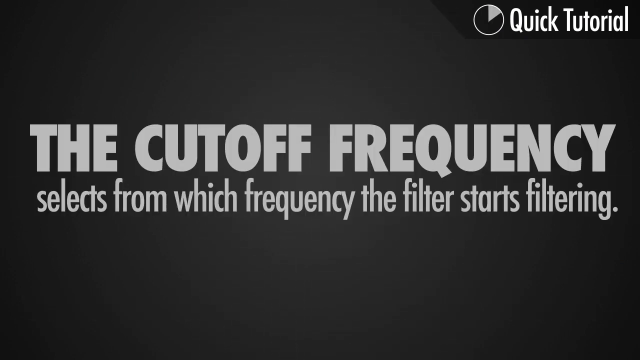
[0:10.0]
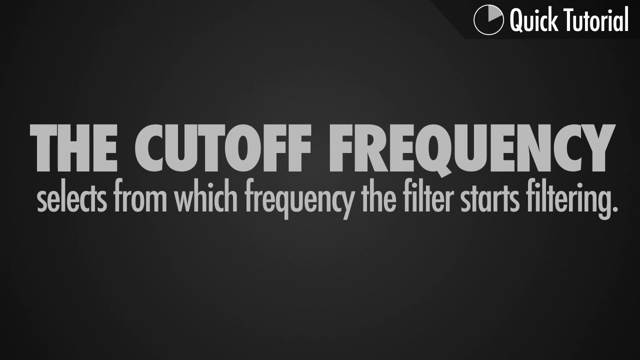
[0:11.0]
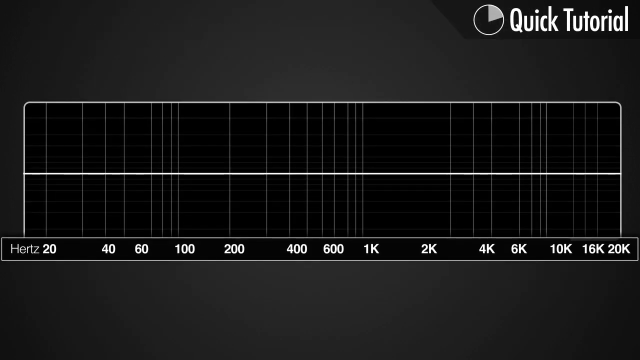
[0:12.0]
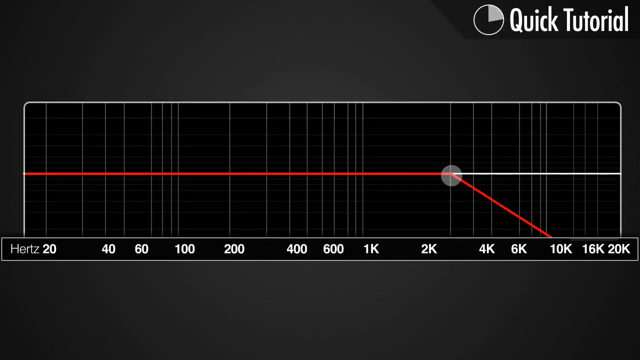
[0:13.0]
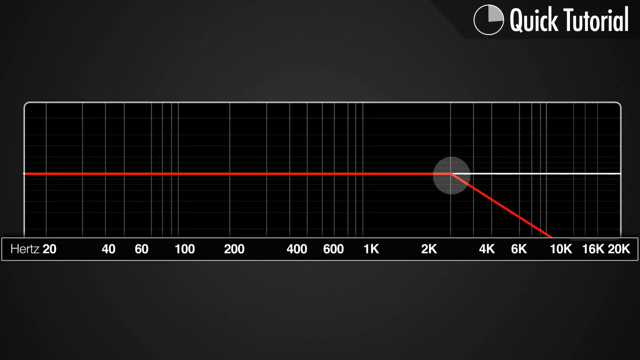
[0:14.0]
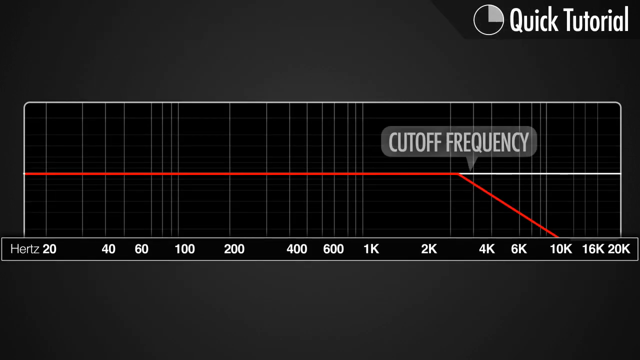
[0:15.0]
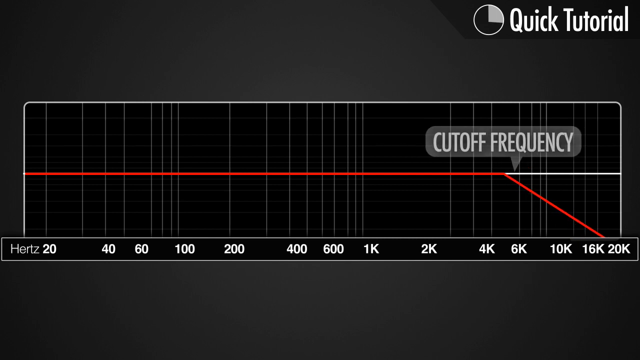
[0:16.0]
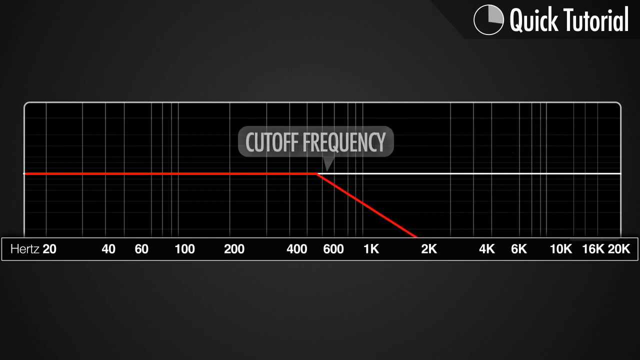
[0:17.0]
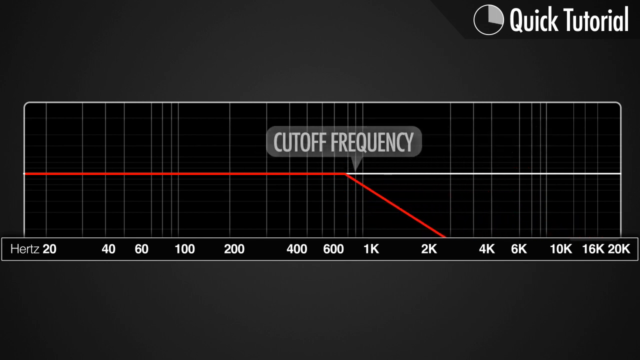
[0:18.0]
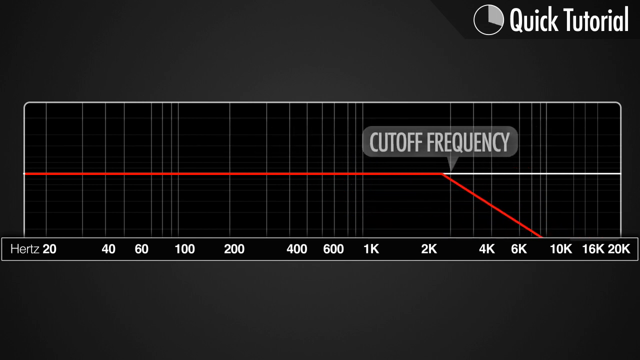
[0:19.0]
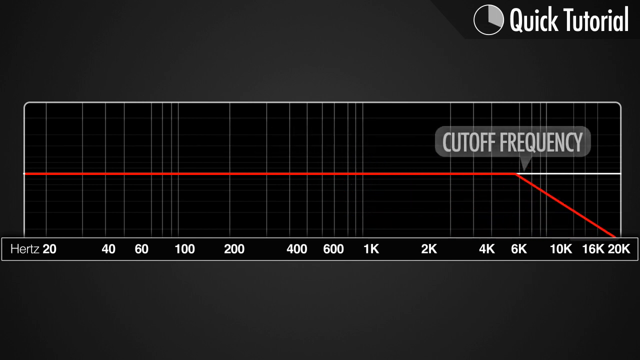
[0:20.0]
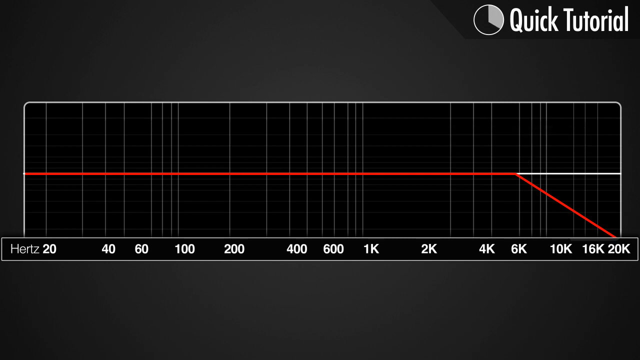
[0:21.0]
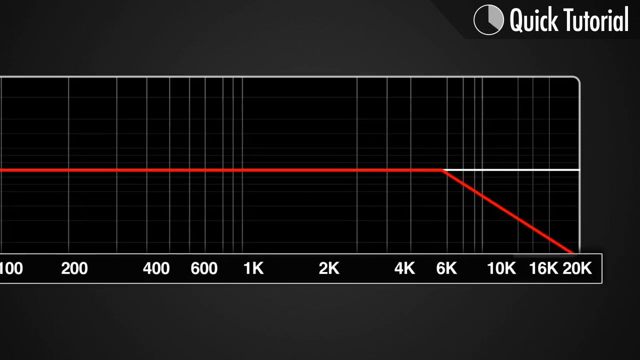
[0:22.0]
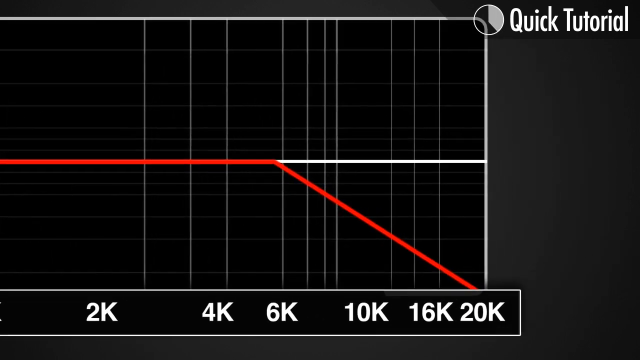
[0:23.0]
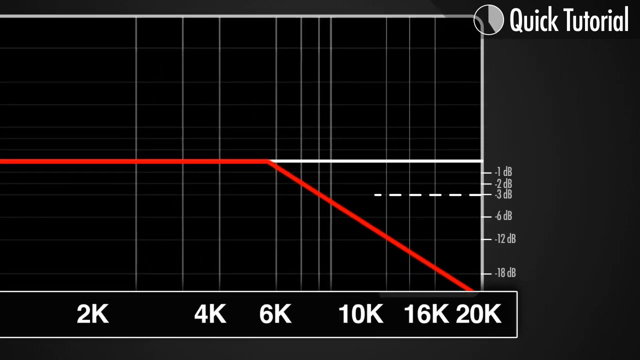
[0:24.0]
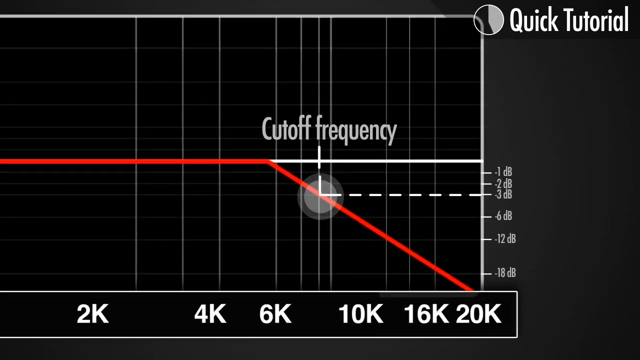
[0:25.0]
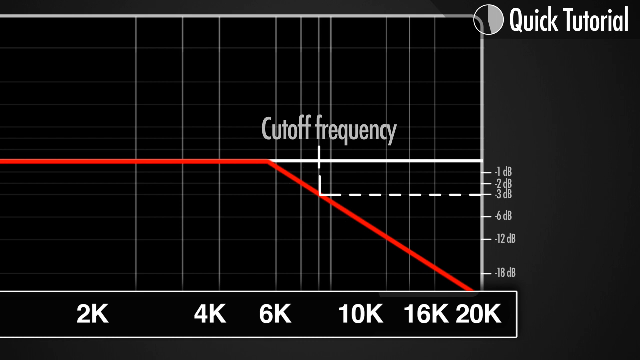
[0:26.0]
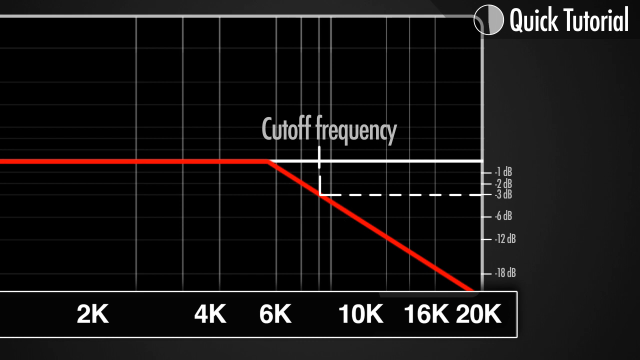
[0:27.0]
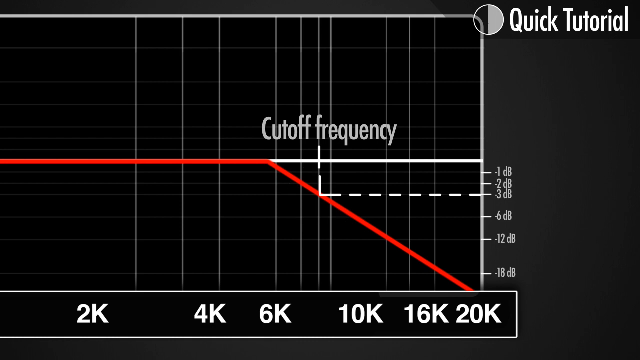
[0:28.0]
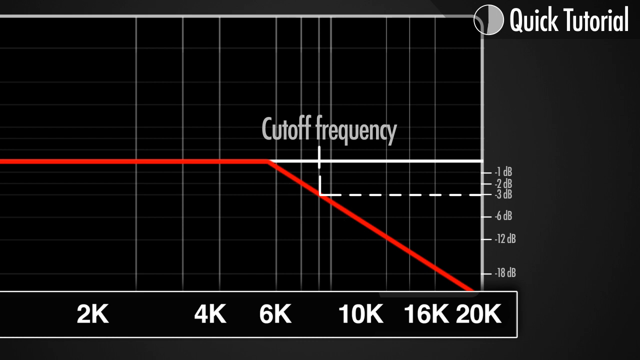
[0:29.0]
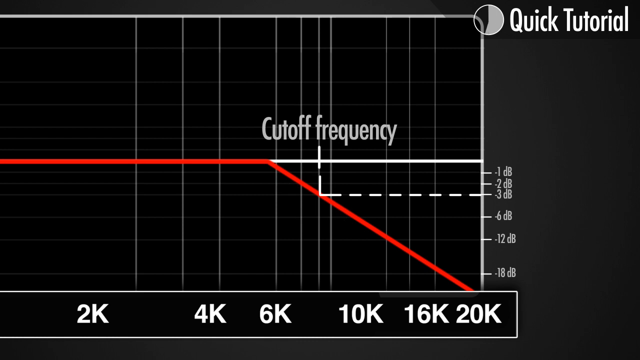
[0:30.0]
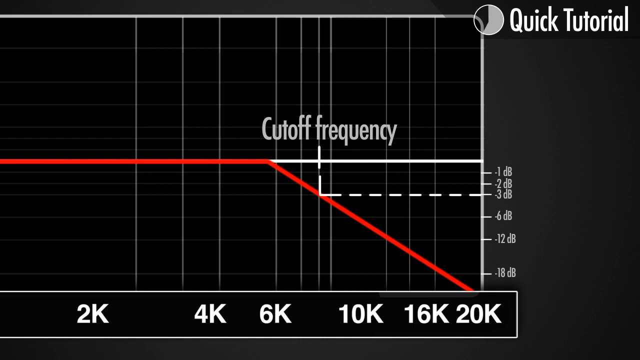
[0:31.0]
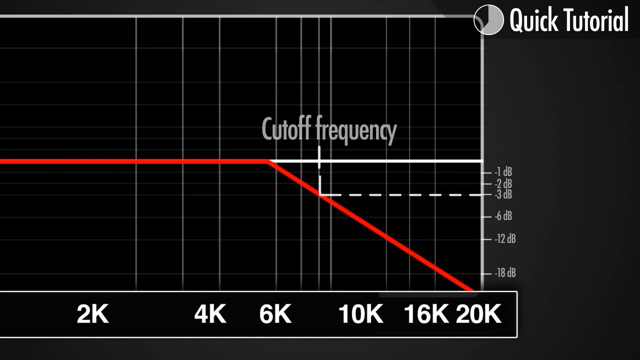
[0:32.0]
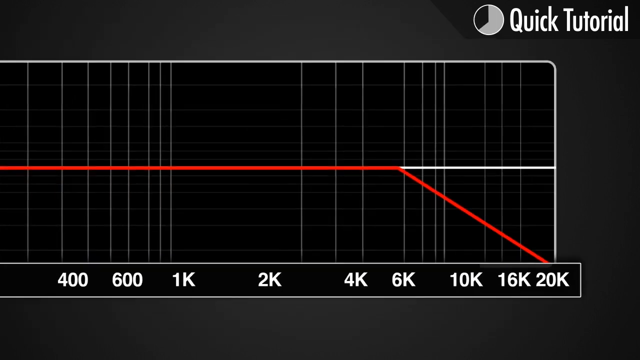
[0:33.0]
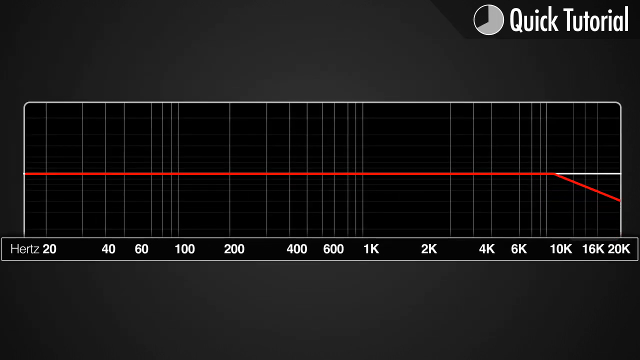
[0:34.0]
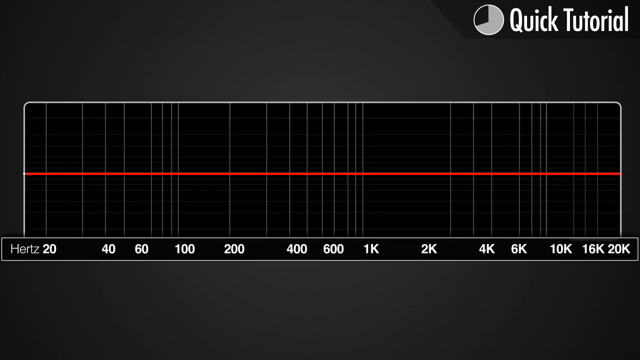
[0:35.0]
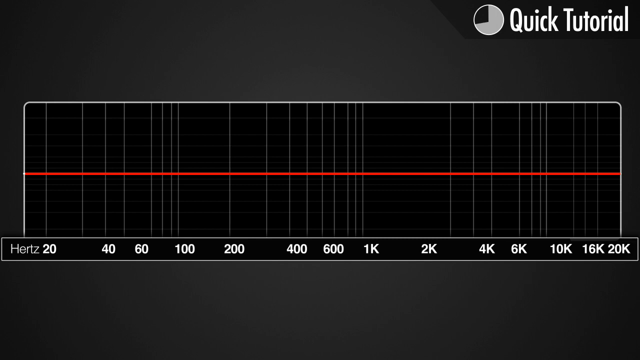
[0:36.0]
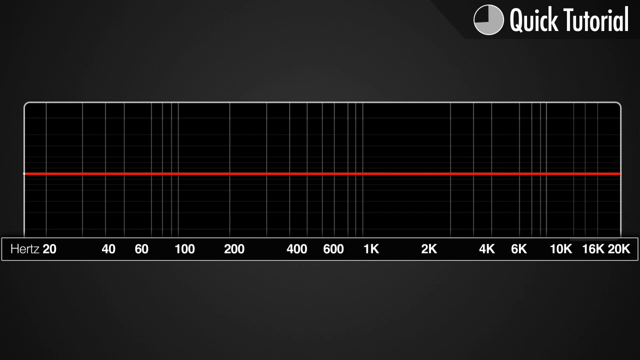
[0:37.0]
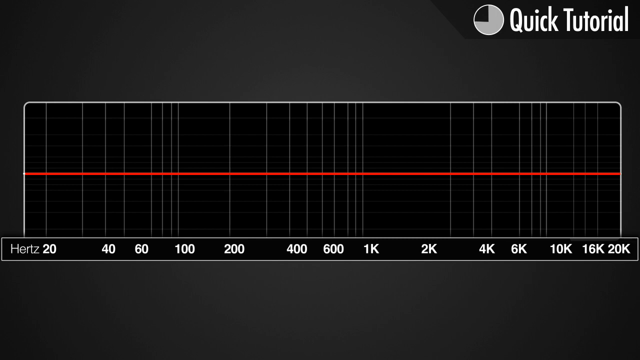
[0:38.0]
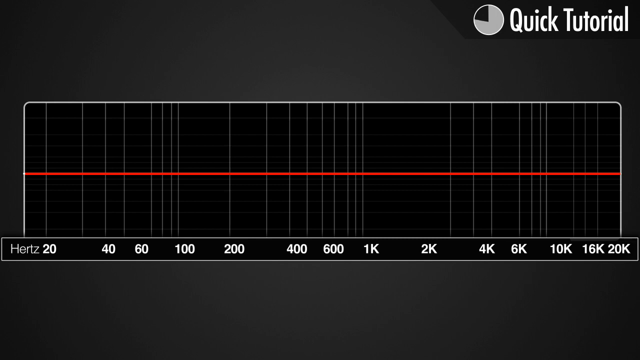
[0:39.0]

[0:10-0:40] A little black circle with a white border has a bit of gray inside it, almost like a clock, and the gray grows clockwise as the video plays. A big white square with vertical lines appears, with a red line running about halfway across it; that turns white and moves away across. Below it on the left is the word "Hertz," with numbers across the bottom lined up under the lines. The red then extends about three quarters of the way, just past the 2K mark, and angles down to the right to the 10K mark, with "cut off frequency" in gray above it. The point is slid a little to the right and back, and as it slides, the downward-angled part and the part on the center line move back and forth. It is slid all the way over, back to about 1K, and back over to 20K, and the view zooms in there: the line deviates down to the right at 6K and touches at 20K. On the right side, just below the line, labels read "0.1 dB," "0.2 dB," and "0.3 dB," with a dotted line running left from 0.3 dB, followed by "0.6 dB," "0.12 dB," and "0.18 dB." The dotted line goes over and hits the red line, then goes up to the white line with "cut off frequency" above it. The view zooms out, and the red moves up from 20K onto the straight line, making the whole straight line red.